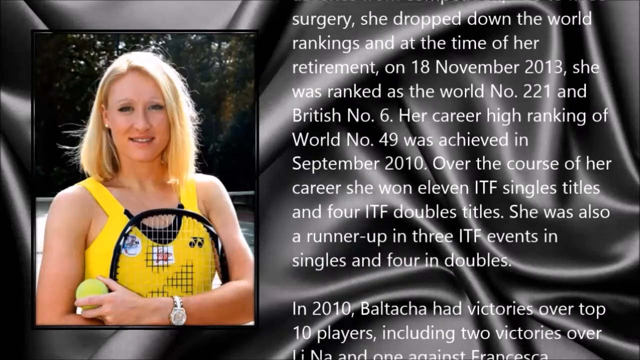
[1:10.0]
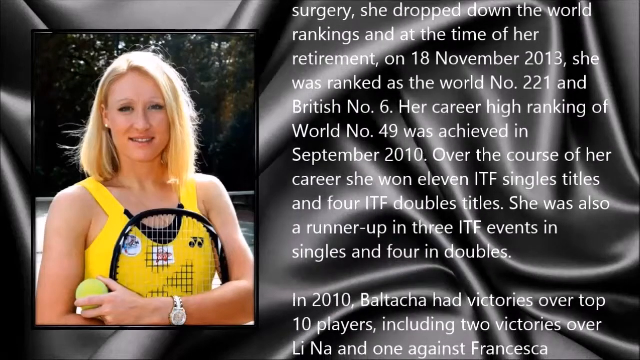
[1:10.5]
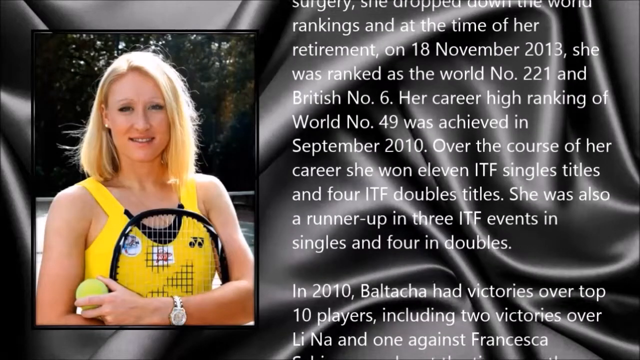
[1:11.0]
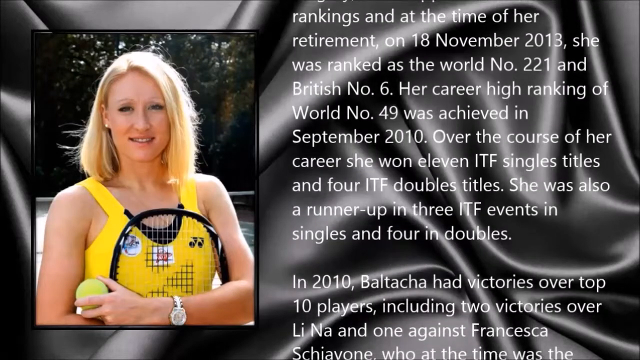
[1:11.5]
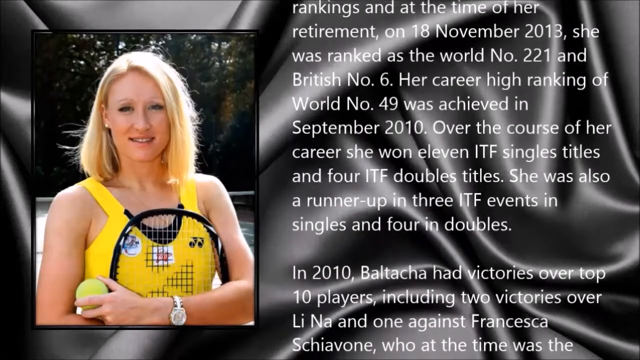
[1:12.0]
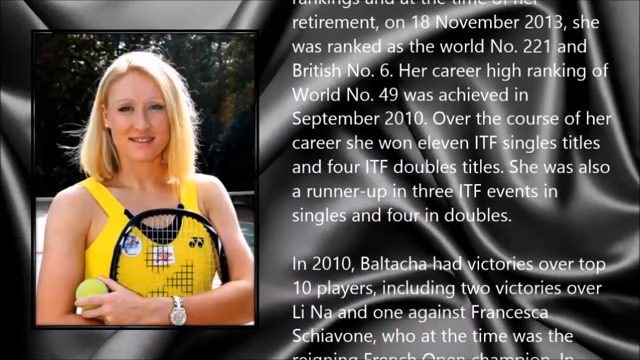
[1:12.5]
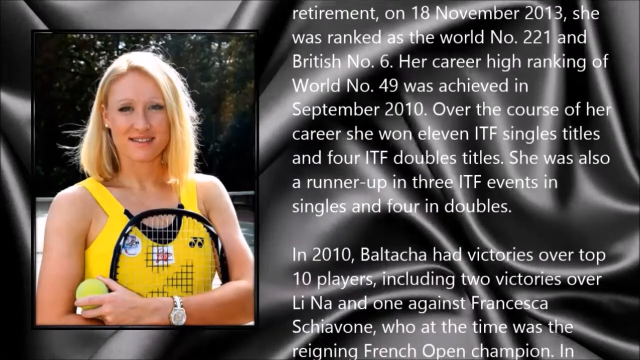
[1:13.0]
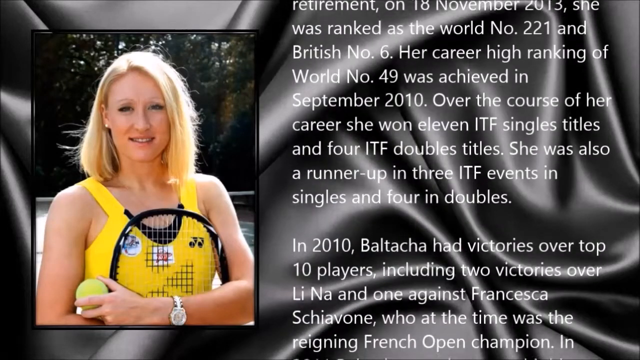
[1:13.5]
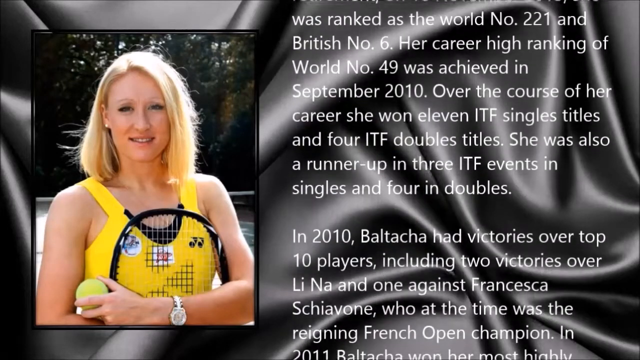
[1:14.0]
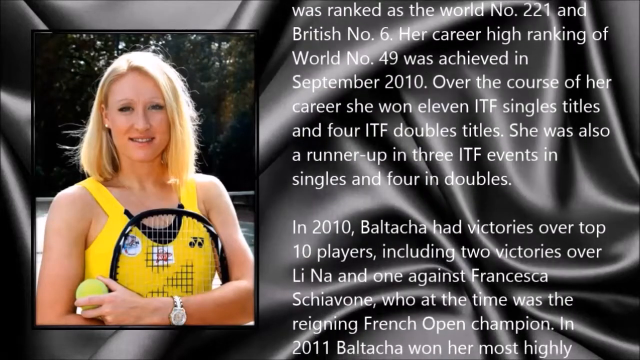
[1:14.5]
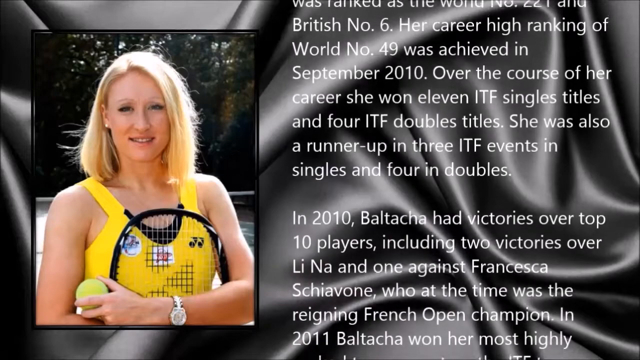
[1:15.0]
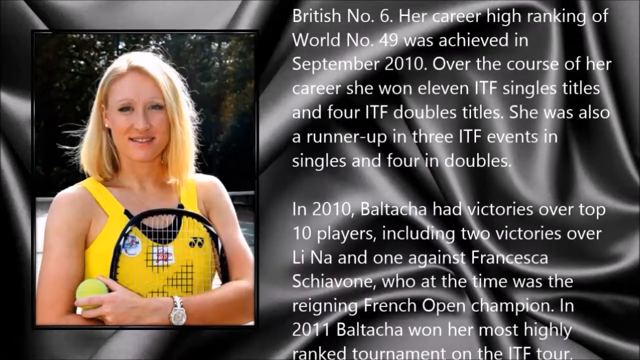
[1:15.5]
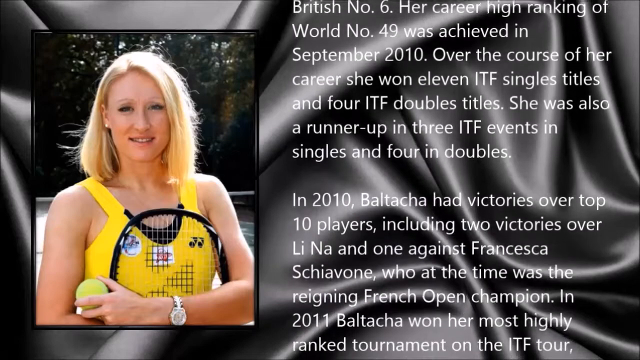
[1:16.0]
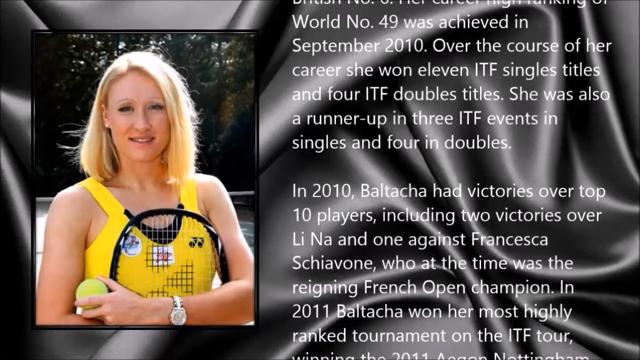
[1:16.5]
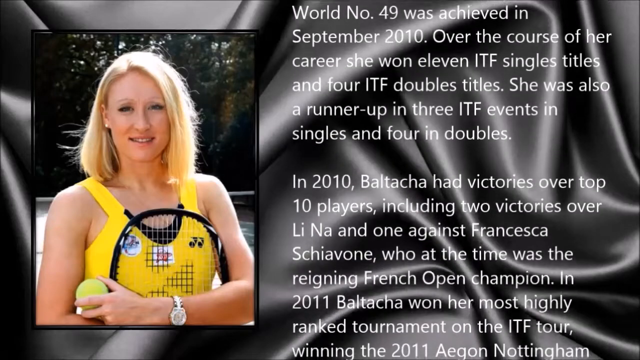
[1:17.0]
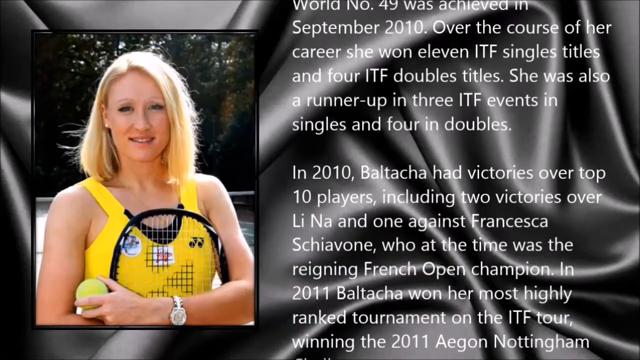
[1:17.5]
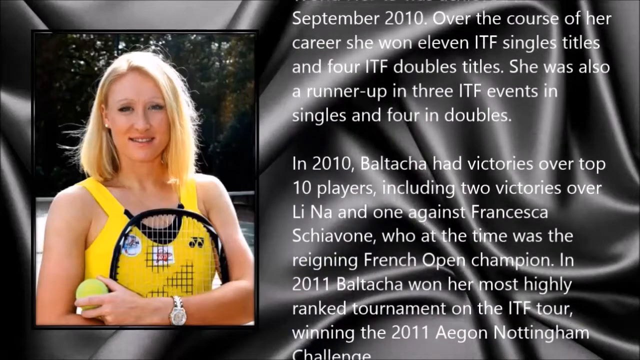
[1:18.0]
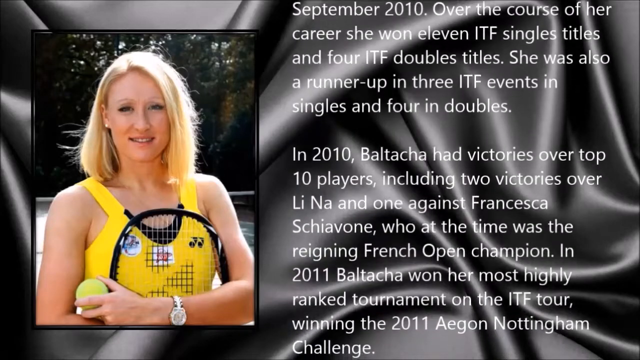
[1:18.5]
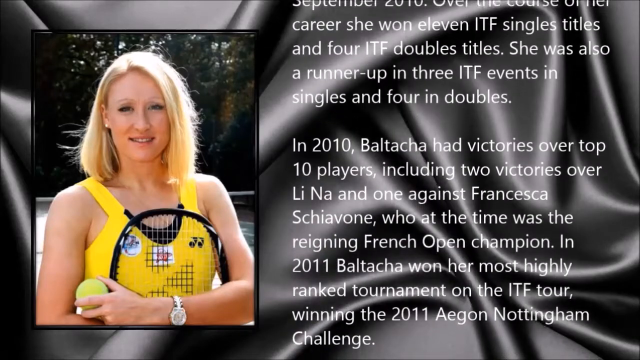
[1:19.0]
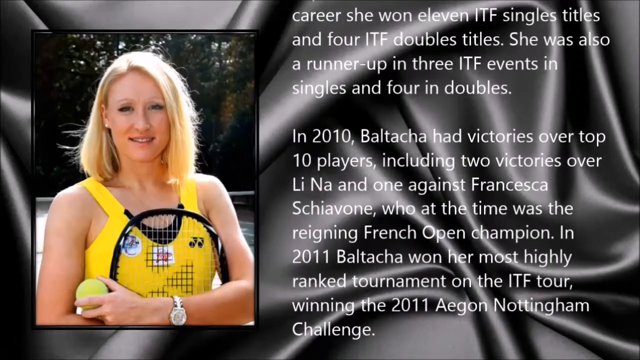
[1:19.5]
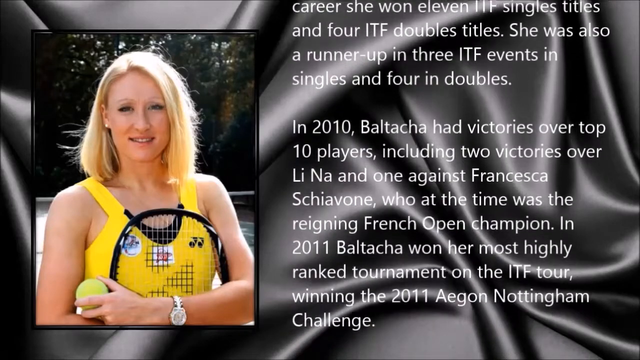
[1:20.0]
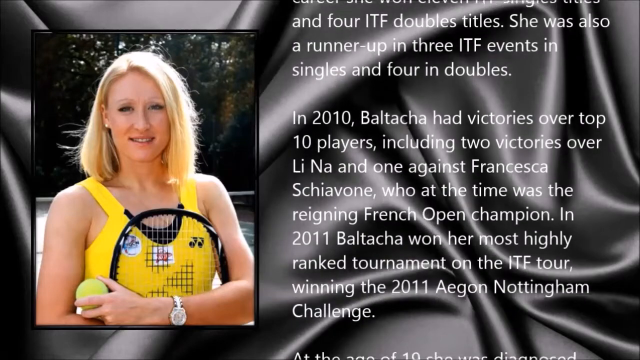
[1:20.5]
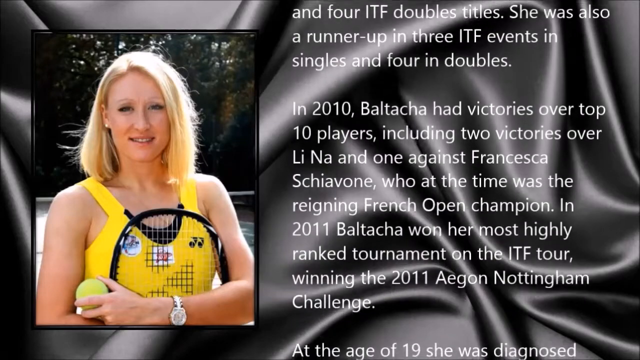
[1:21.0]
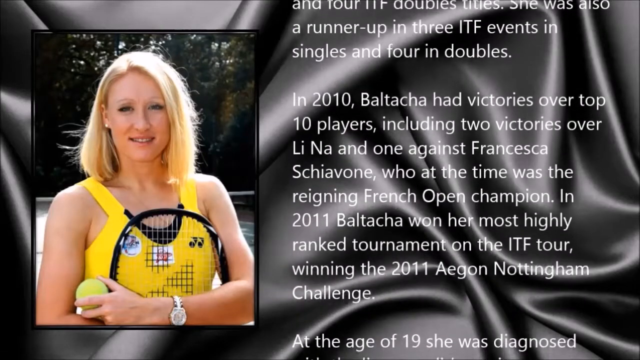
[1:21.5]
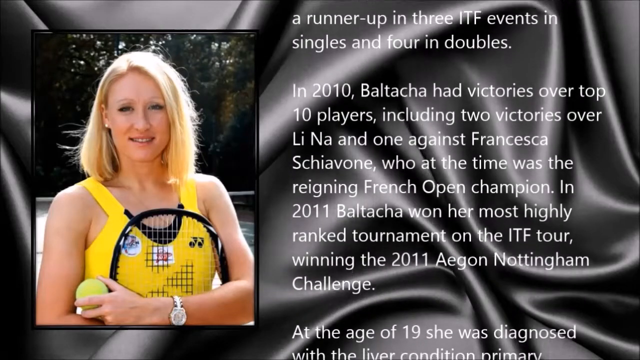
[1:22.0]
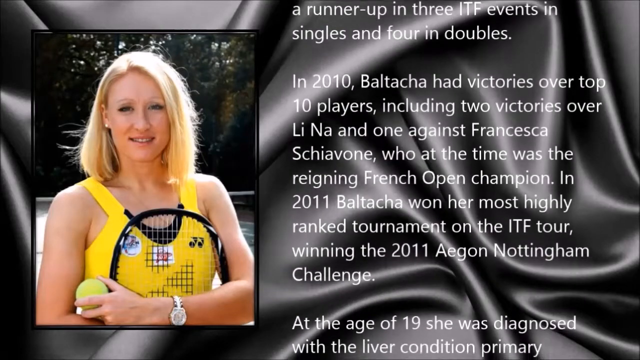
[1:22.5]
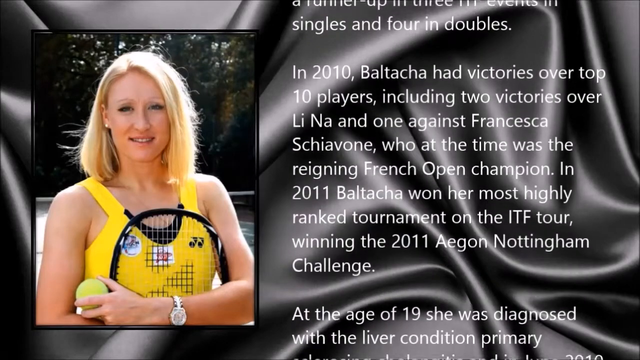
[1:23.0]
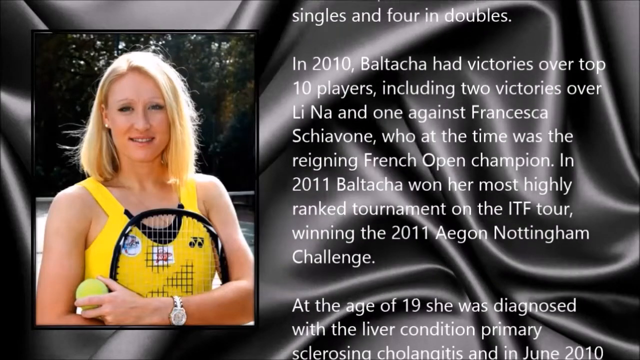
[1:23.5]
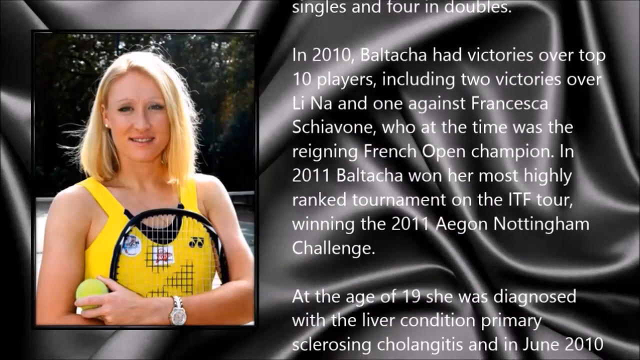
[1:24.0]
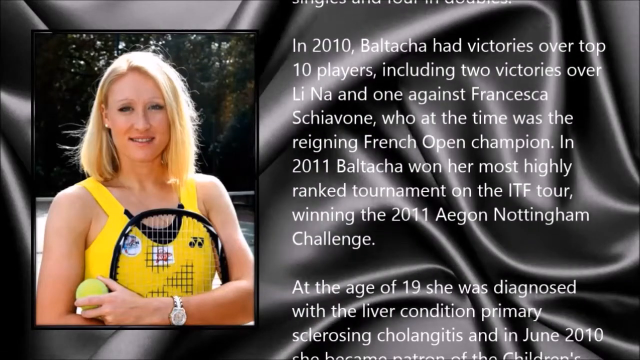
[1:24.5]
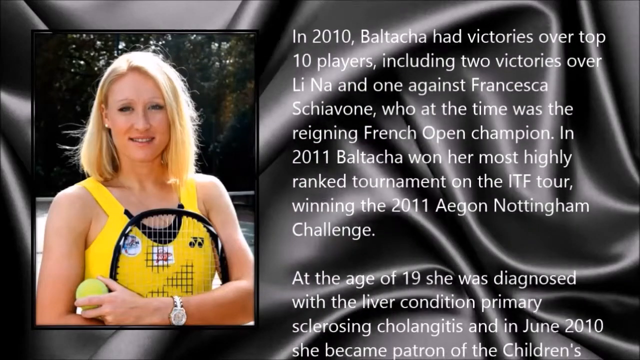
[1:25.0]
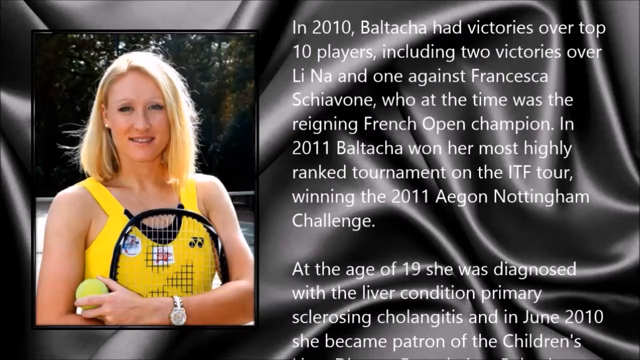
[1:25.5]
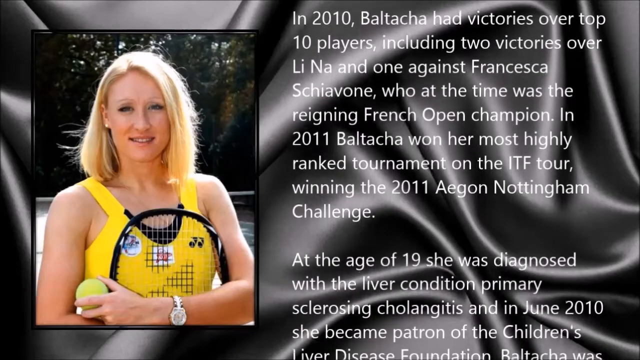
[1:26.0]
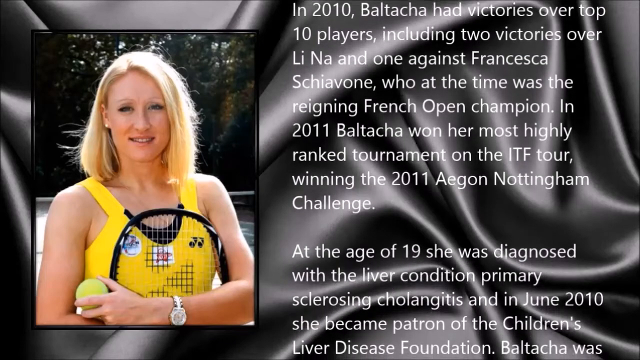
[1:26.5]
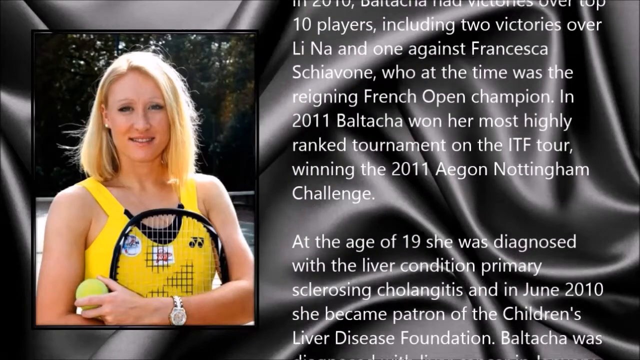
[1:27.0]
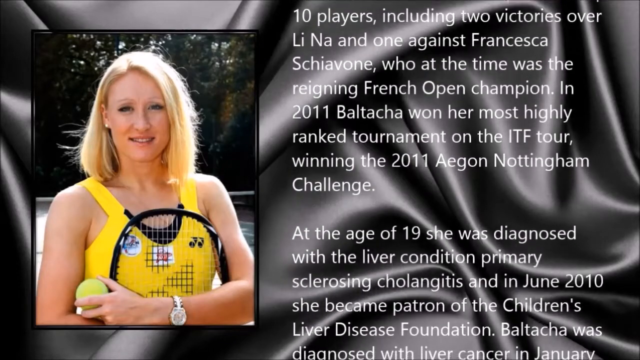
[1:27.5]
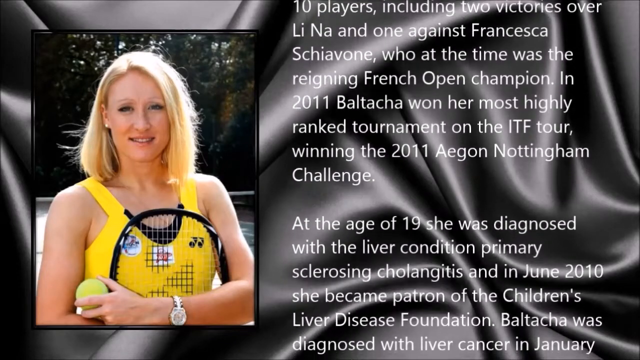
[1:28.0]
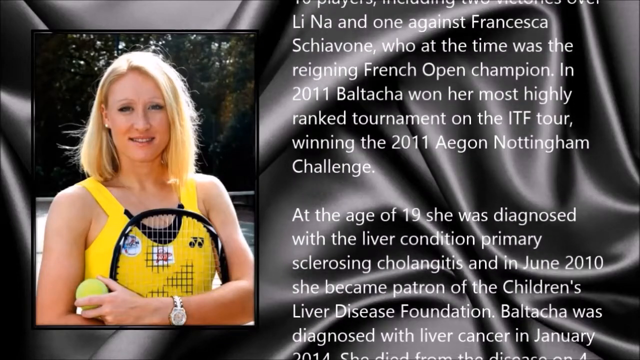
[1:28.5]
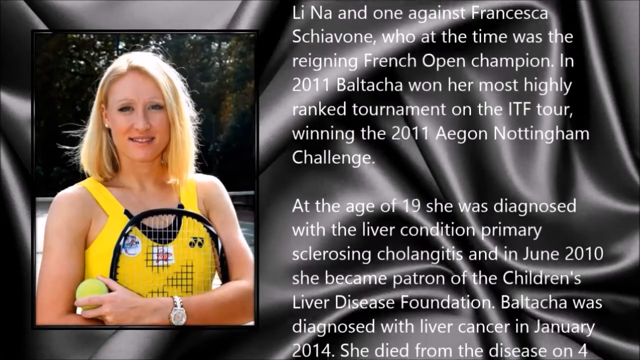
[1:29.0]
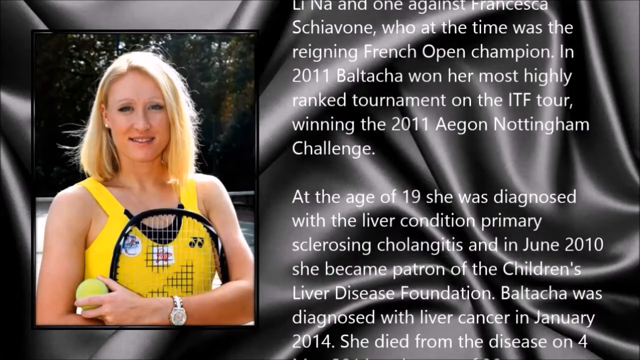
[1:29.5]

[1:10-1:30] The screen looks like a piece of black silk with wrinkles in it. On the left side is a picture of a long-haired blonde woman in a yellow tank top holding a black tennis racket up to her chest, her arms crossed over the racket and her chest. She holds a tennis ball in her left hand and wears a watch on her left wrist. Behind her are some forest and trees. To the right of her, text comes up from the bottom of the screen: "In 2010 Baltacha had victories over top 10 players including two victories over Lee Na and one against Francesca Schiavone who at the time was a reigning French Open champion. In 2011 Baltacha won her most highly ranked tournament on the ATF tour winning the 2011 Aegon Nottingham Challenge."